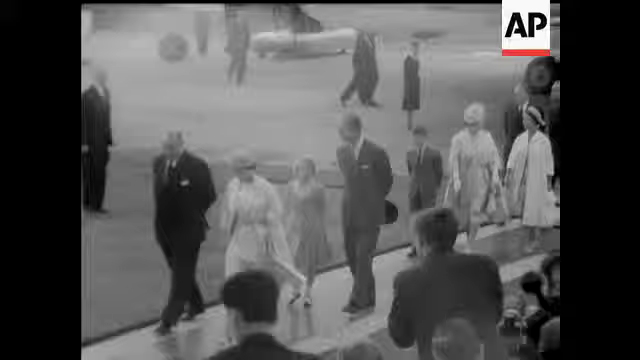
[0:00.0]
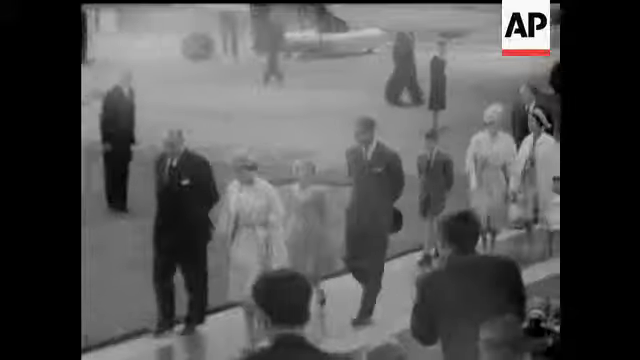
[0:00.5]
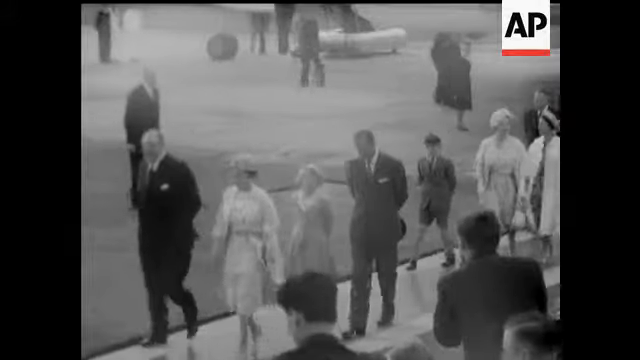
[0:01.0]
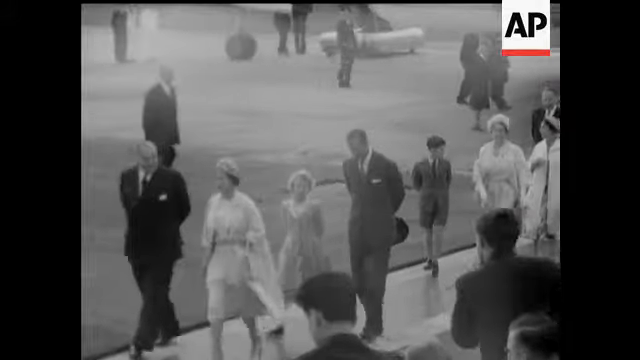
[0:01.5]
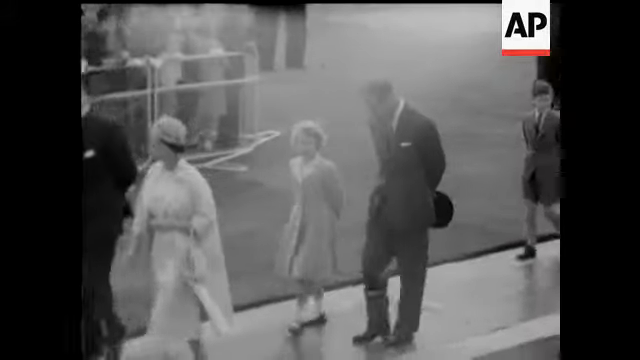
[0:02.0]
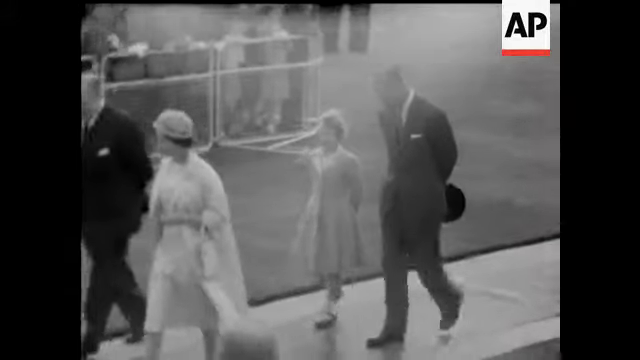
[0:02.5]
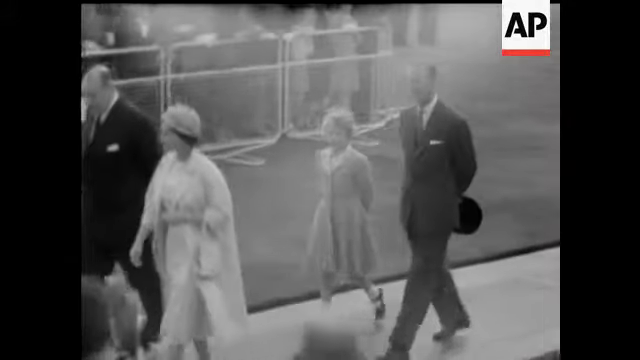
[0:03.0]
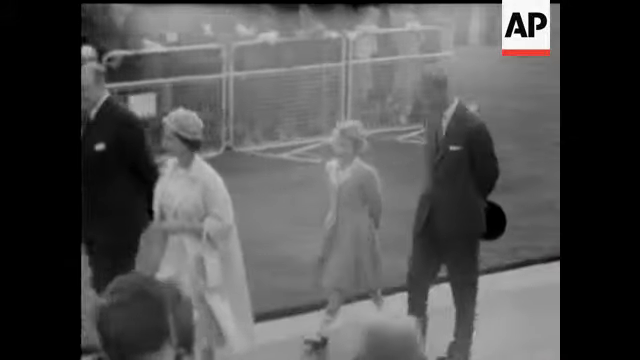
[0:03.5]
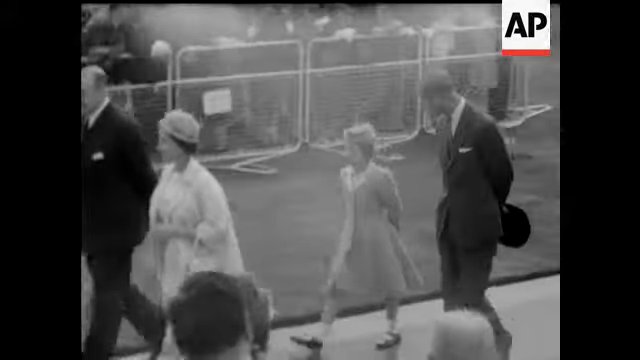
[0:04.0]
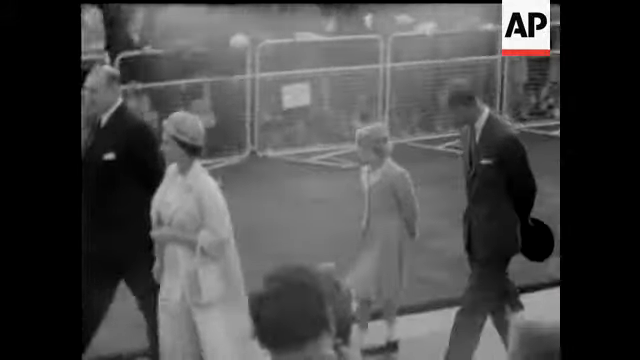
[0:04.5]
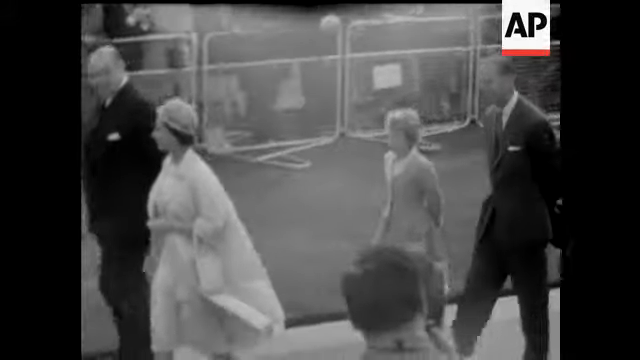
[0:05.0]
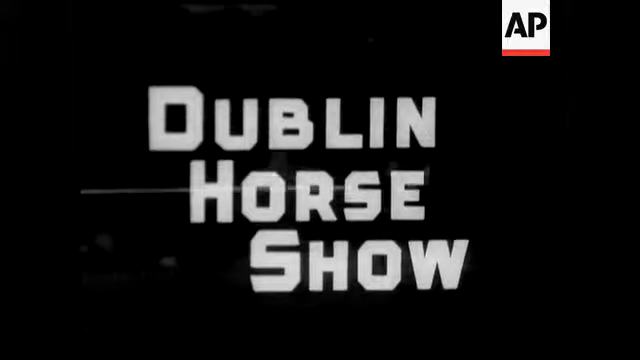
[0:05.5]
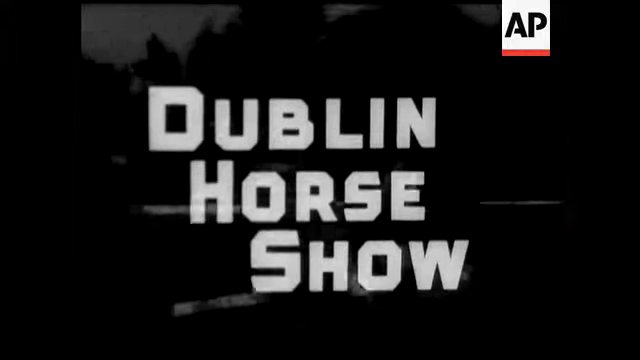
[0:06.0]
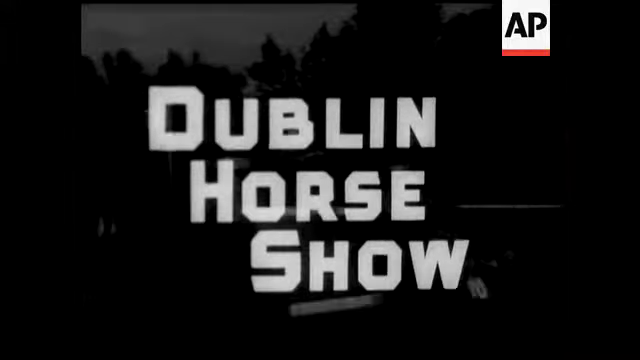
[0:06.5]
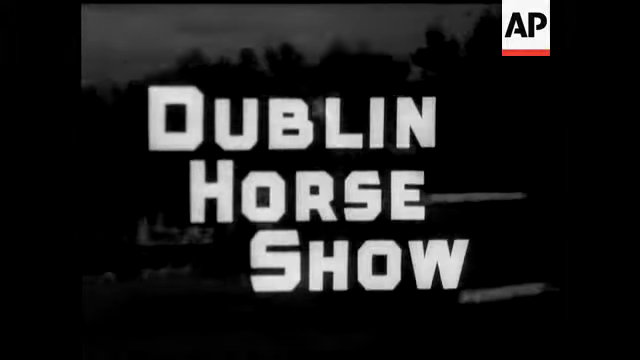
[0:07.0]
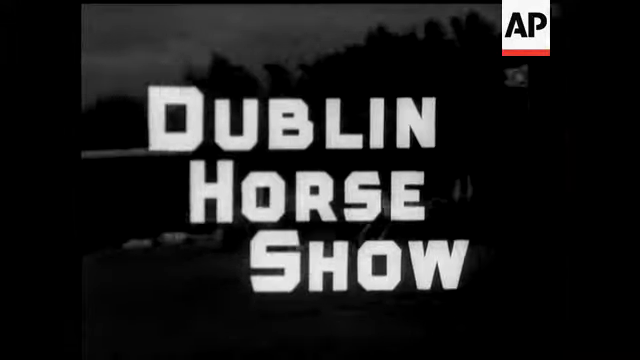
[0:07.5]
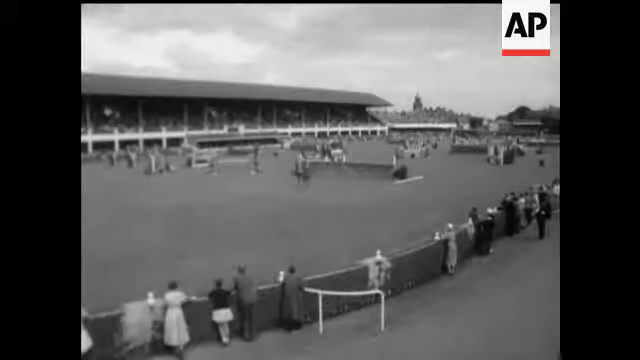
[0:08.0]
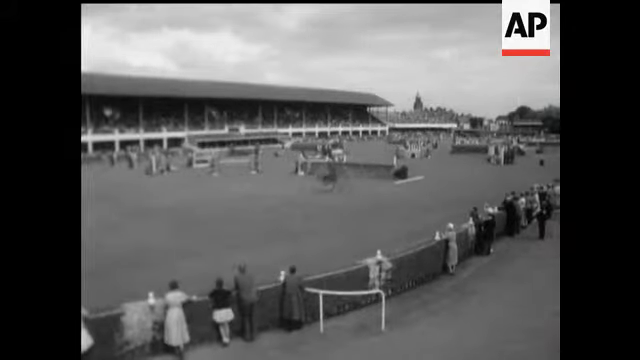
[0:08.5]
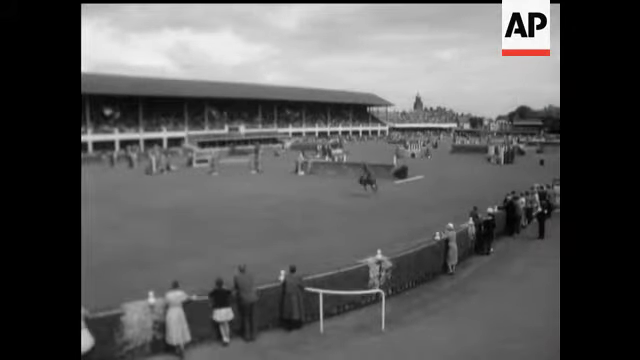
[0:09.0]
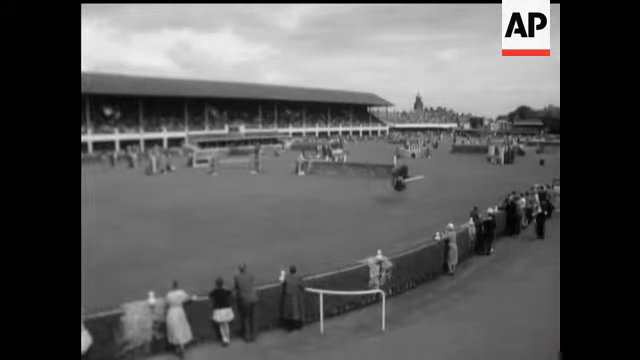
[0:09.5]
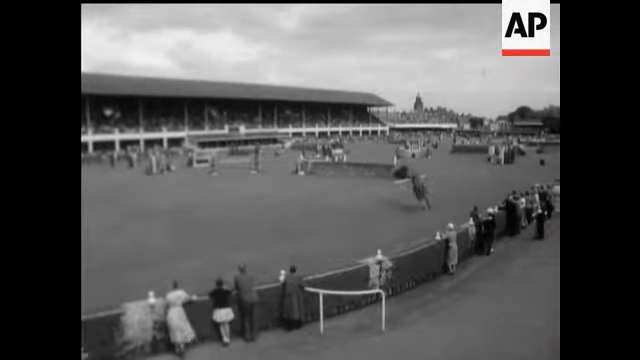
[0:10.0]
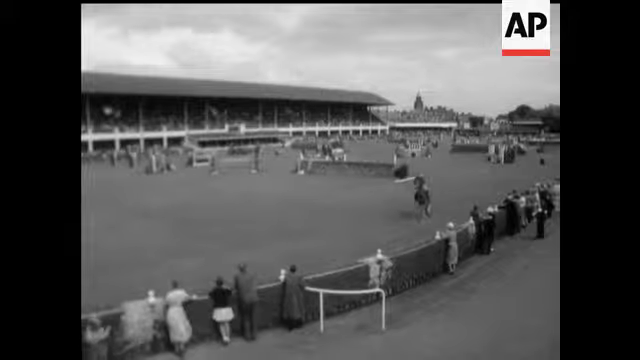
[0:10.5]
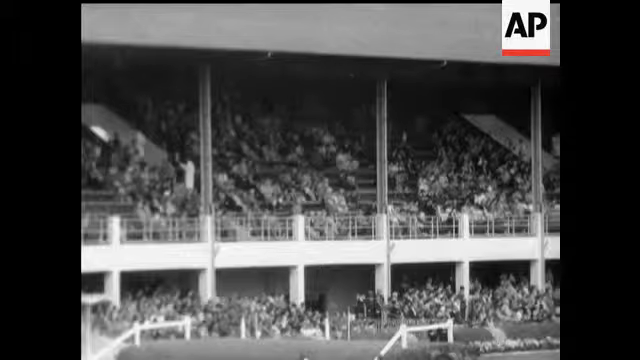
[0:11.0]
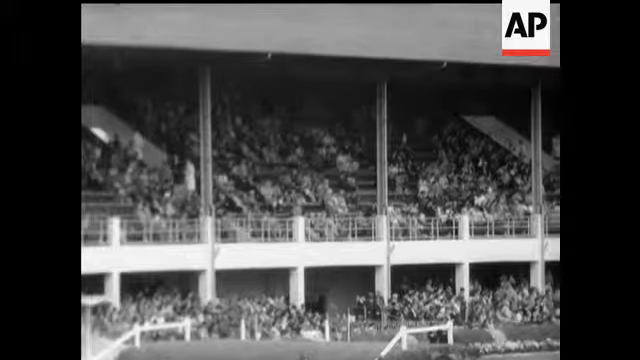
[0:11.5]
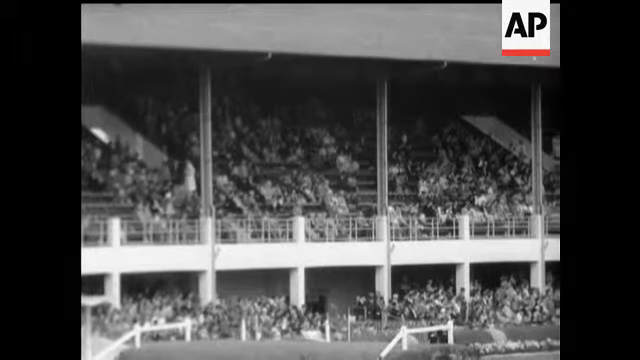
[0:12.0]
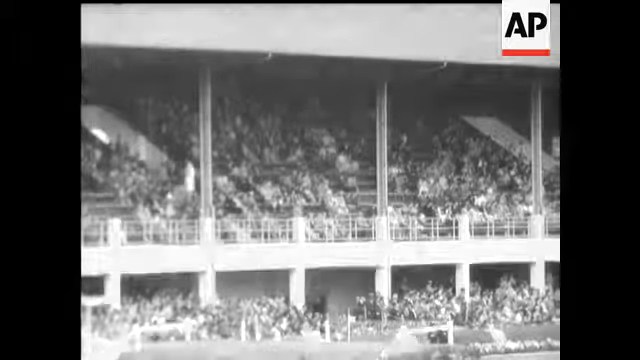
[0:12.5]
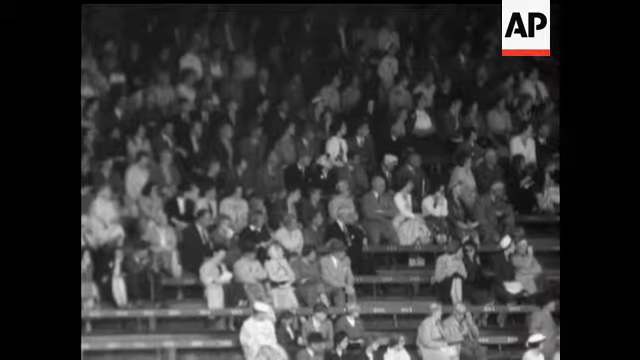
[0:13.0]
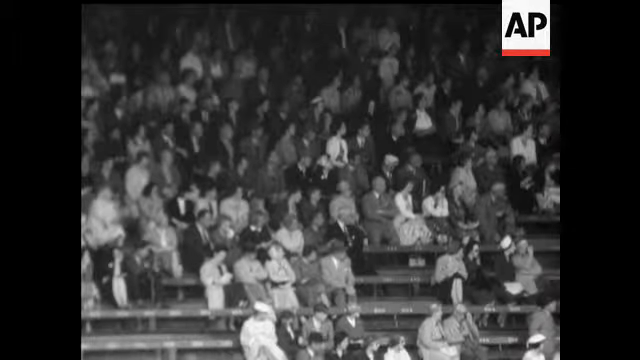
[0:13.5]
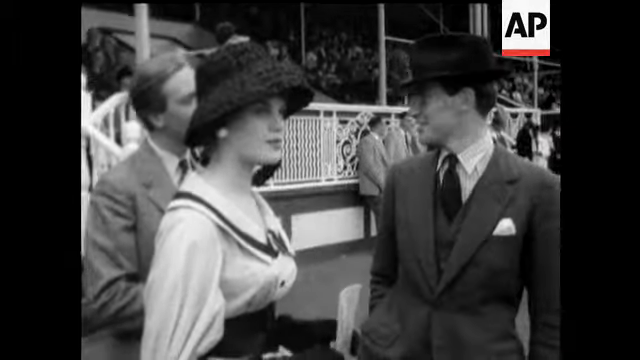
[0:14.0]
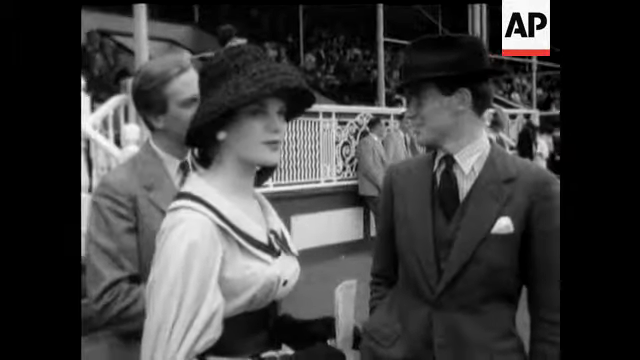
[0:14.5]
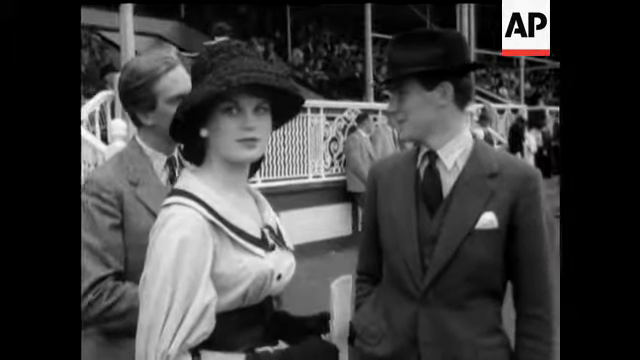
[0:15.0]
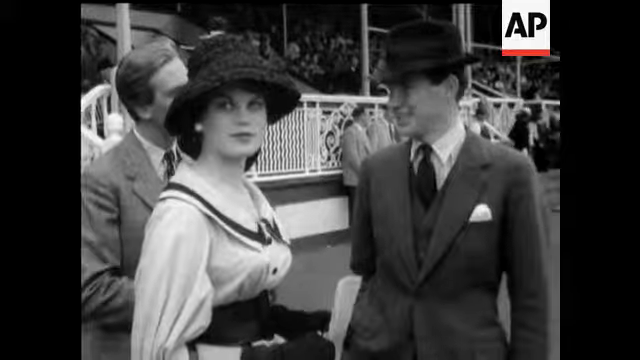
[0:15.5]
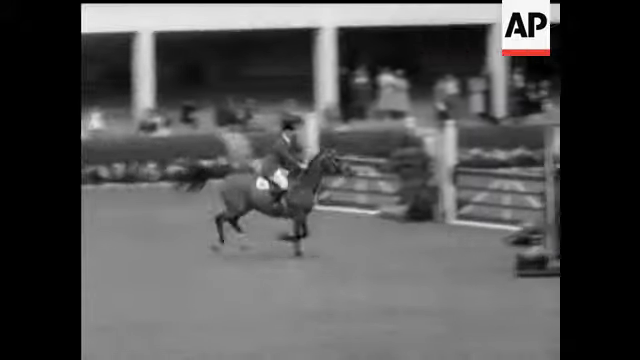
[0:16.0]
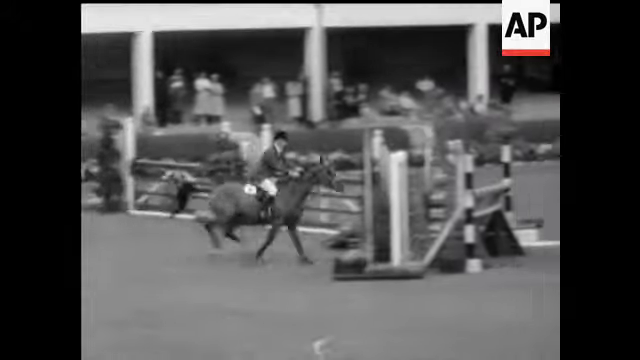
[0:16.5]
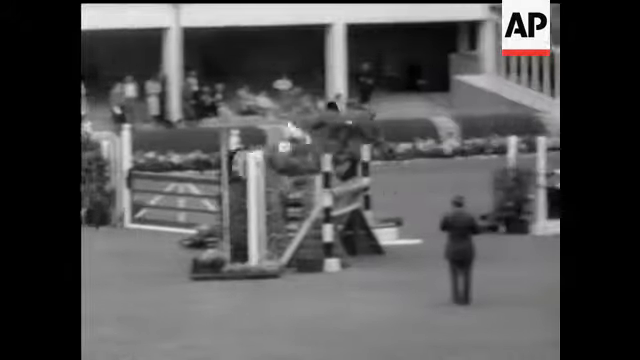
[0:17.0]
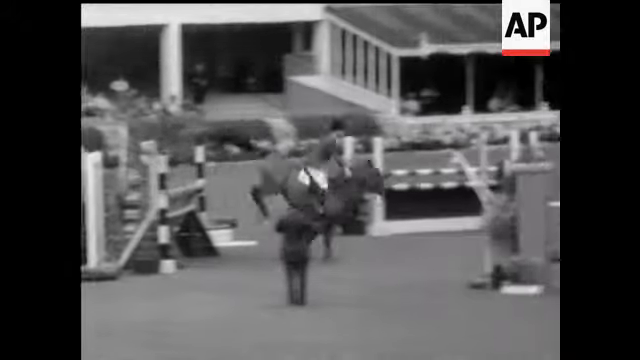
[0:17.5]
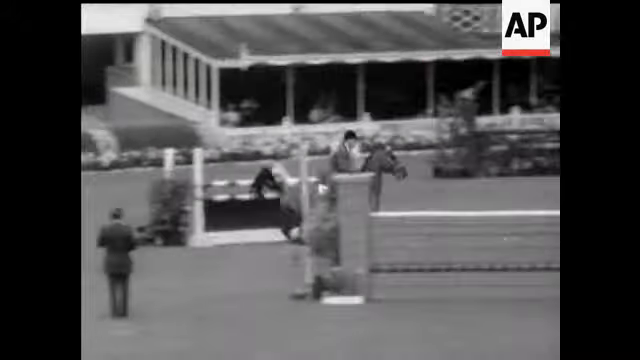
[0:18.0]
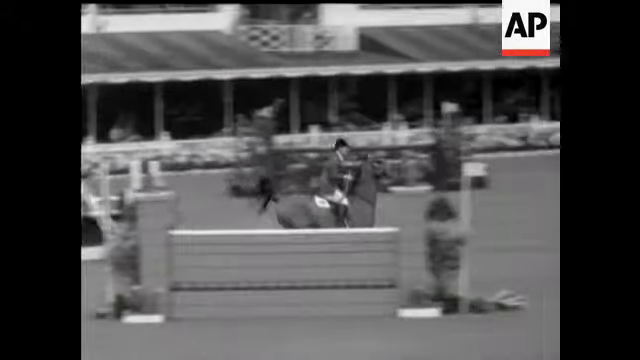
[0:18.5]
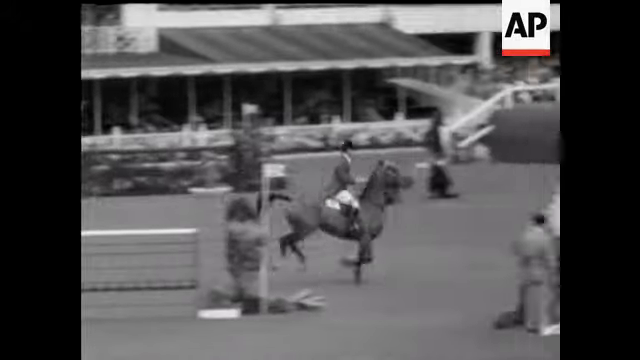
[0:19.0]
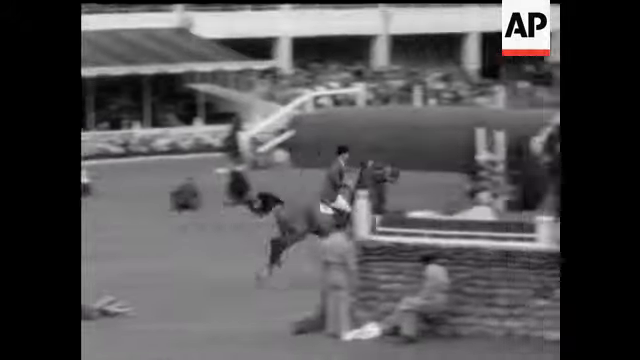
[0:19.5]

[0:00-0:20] Black-and-white footage shows several men and women with their hands behind their backs walking along in a respectful manner. Large black letters reading "Dublin Horse Show" appear on the screen against a dark background. The next shot is of a horse stadium where different equine activities are happening. A wide-angle shot shows the crowd in the stadium, which is almost full, with several people watching the presentation. The letters "AP" are in the top right-hand corner of the screen. A closer shot shows many people sitting in the crowd wearing somewhat fancy outfits, including a woman in a dark hat and a white long-sleeved shirt and a man also wearing a hat. A horse jumps over a jump, its rider masterfully riding it as it maneuvers through the obstacles. All of the footage is black and white, and many people are attending the event in Dublin as the horses show off their skills.